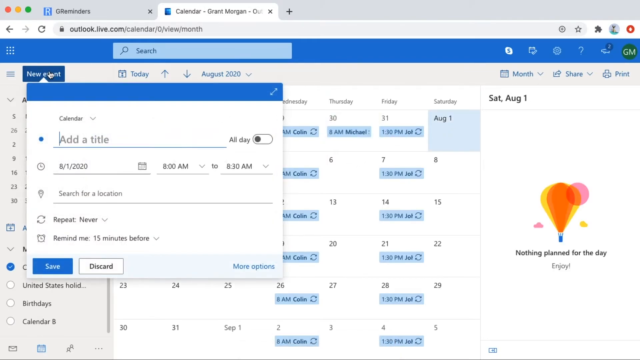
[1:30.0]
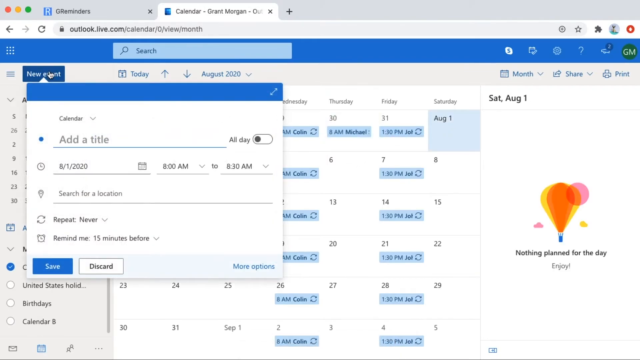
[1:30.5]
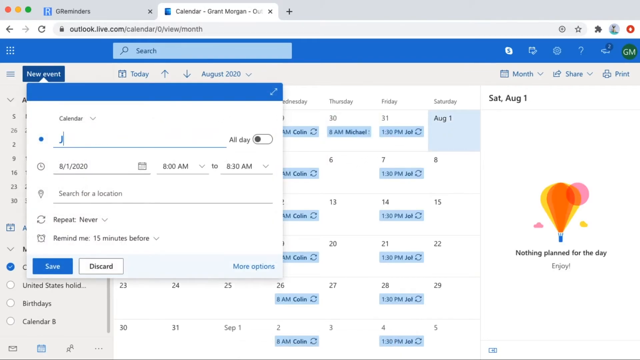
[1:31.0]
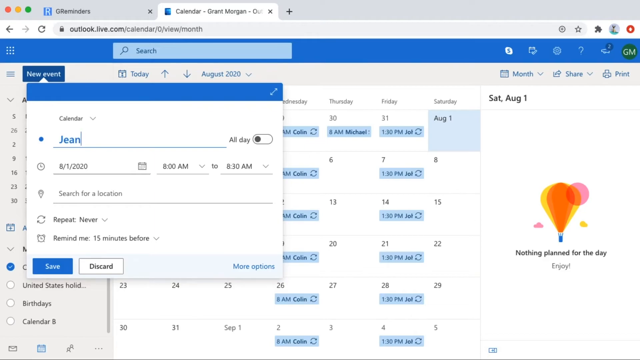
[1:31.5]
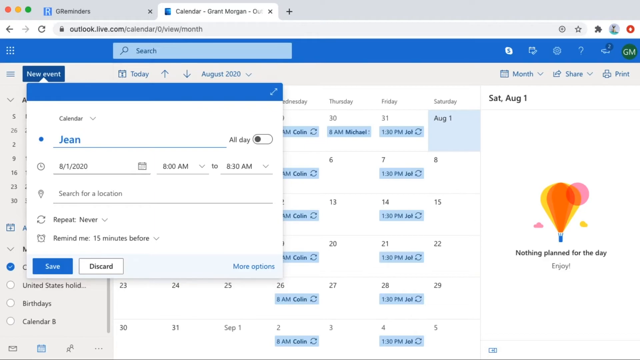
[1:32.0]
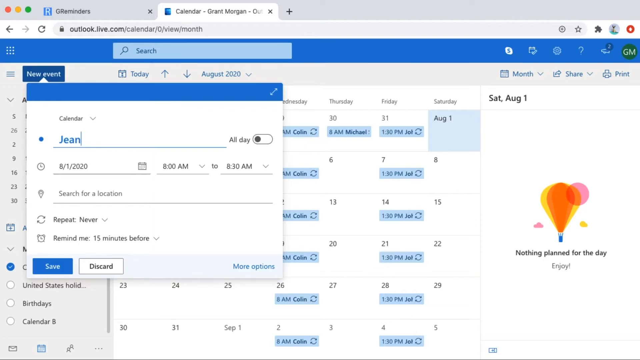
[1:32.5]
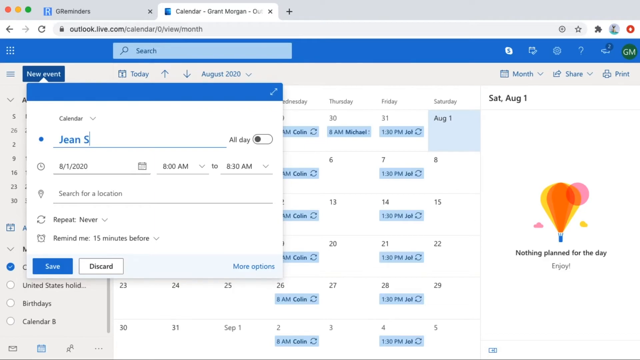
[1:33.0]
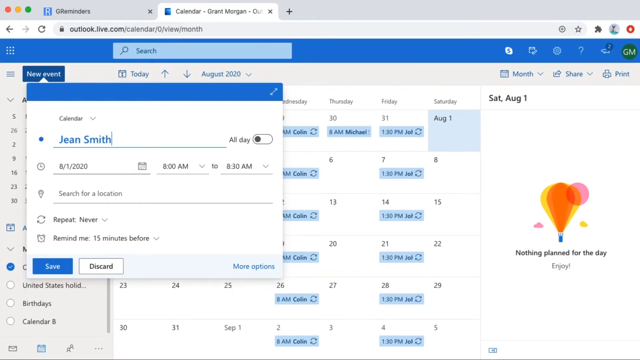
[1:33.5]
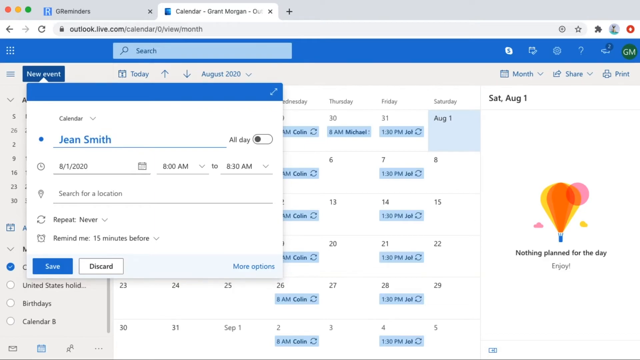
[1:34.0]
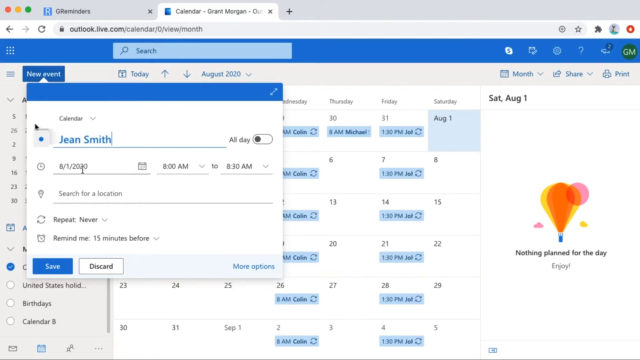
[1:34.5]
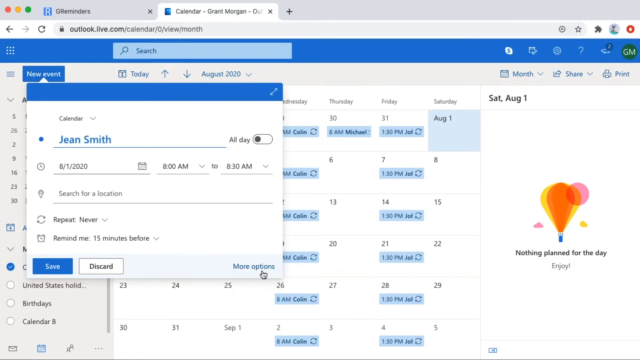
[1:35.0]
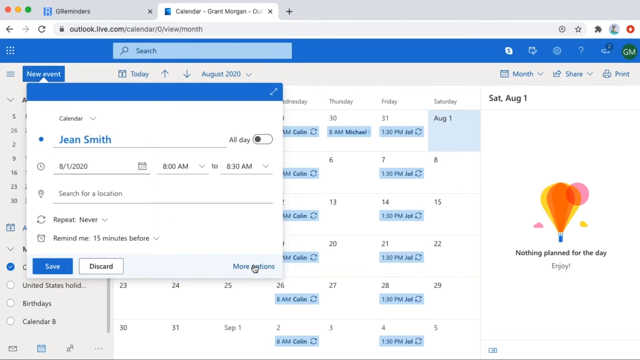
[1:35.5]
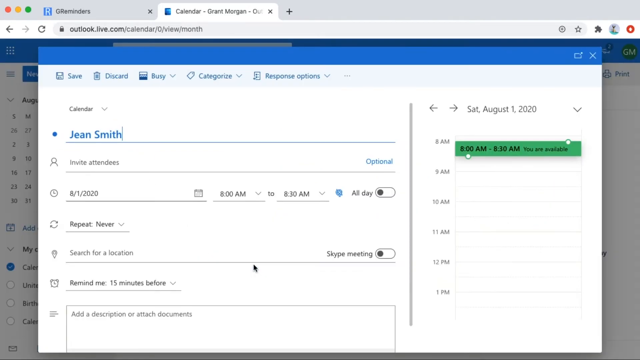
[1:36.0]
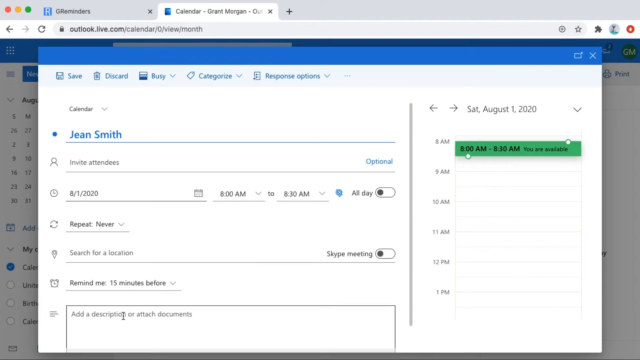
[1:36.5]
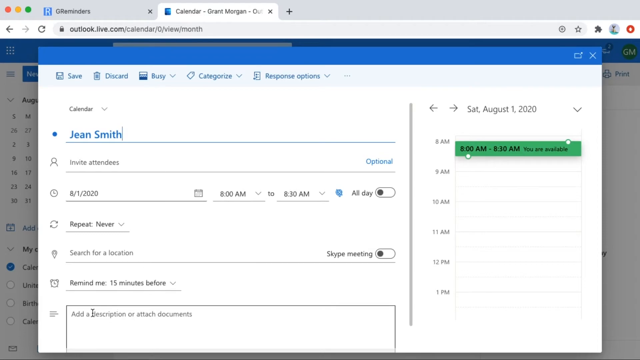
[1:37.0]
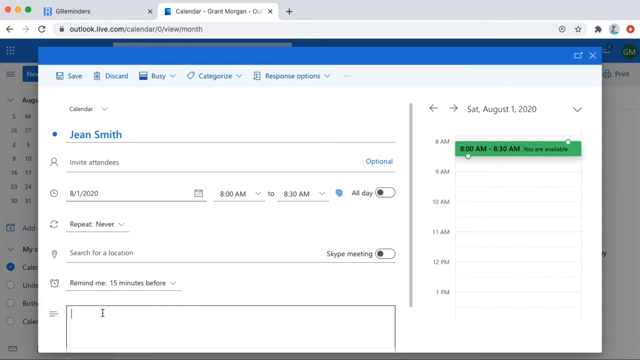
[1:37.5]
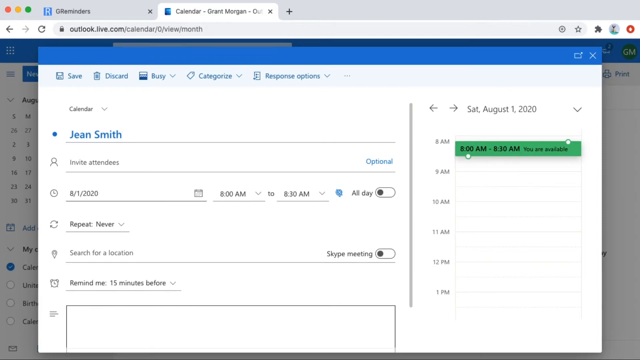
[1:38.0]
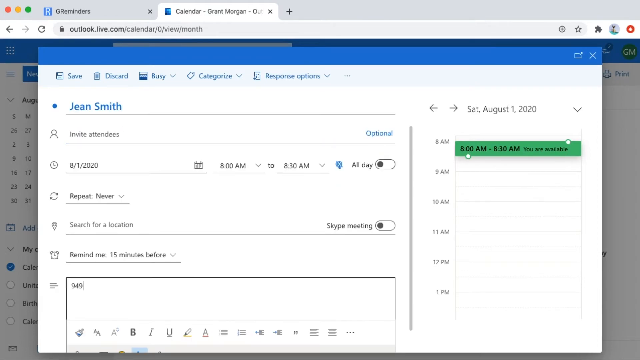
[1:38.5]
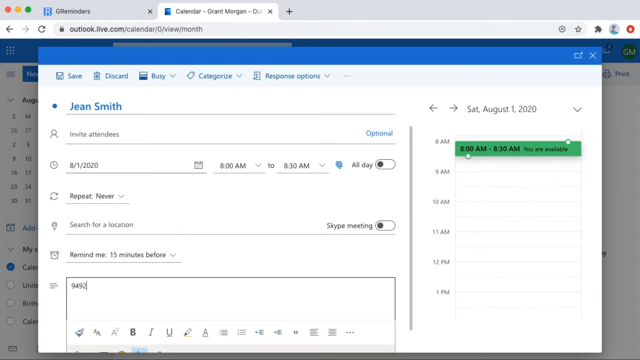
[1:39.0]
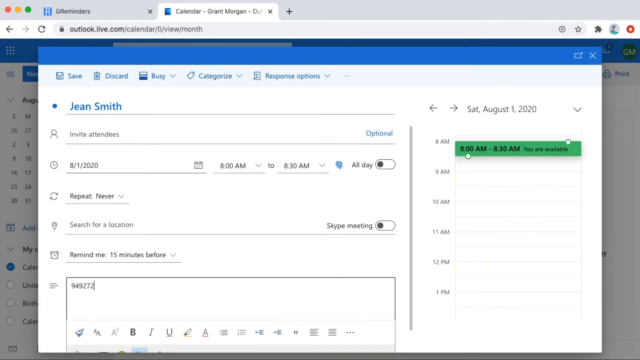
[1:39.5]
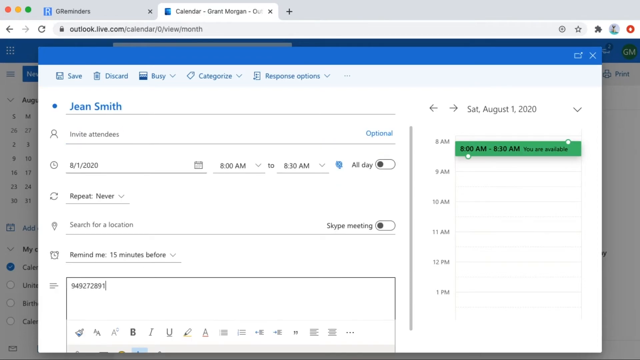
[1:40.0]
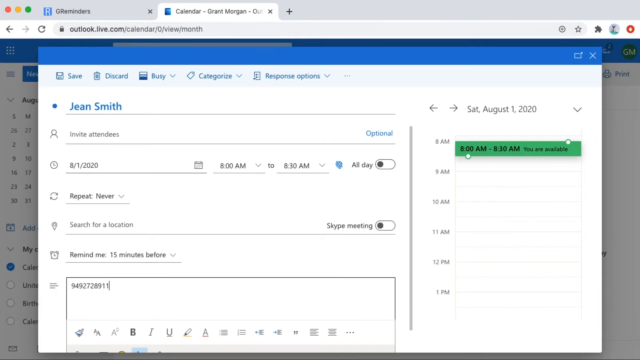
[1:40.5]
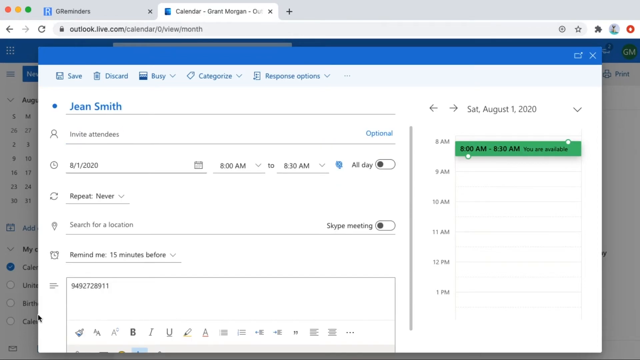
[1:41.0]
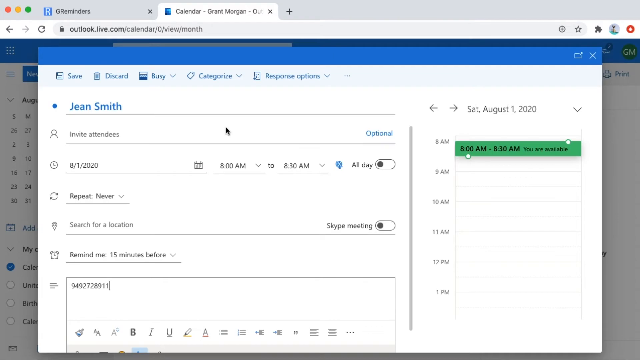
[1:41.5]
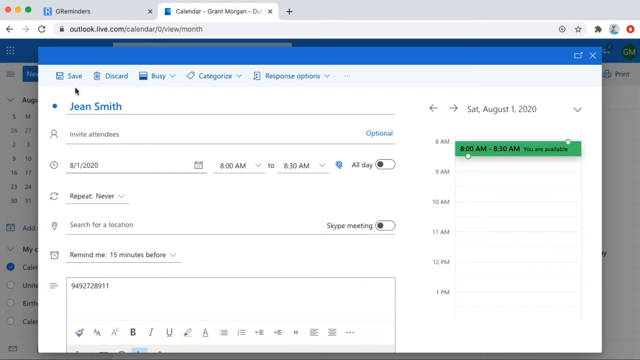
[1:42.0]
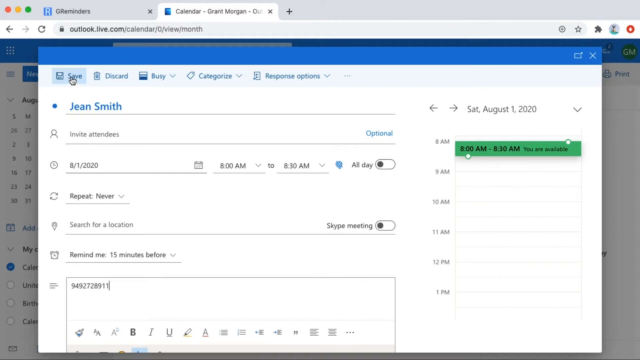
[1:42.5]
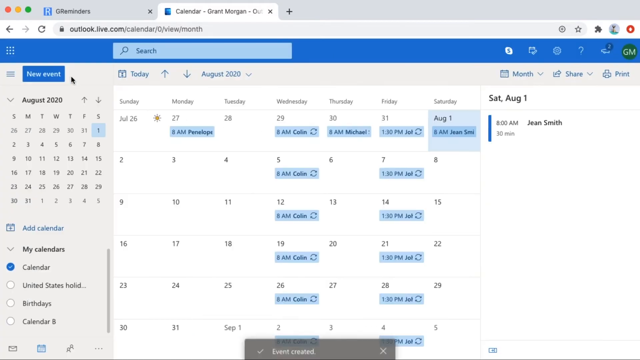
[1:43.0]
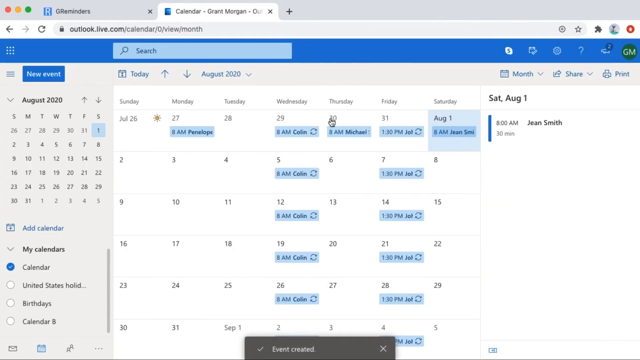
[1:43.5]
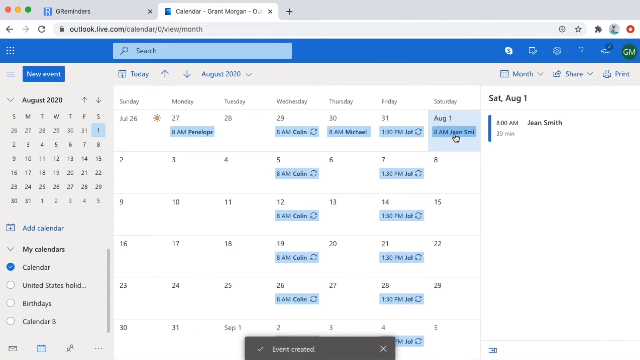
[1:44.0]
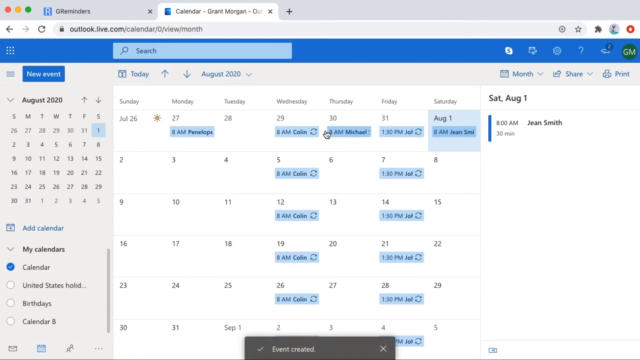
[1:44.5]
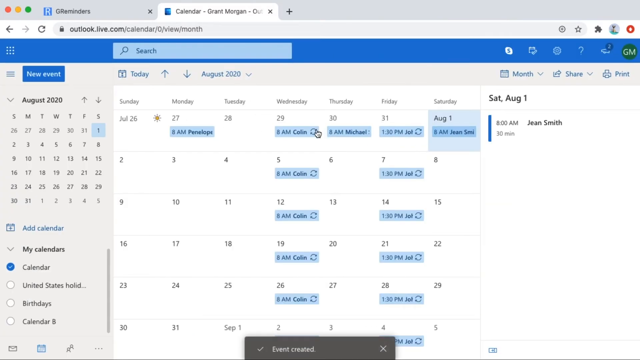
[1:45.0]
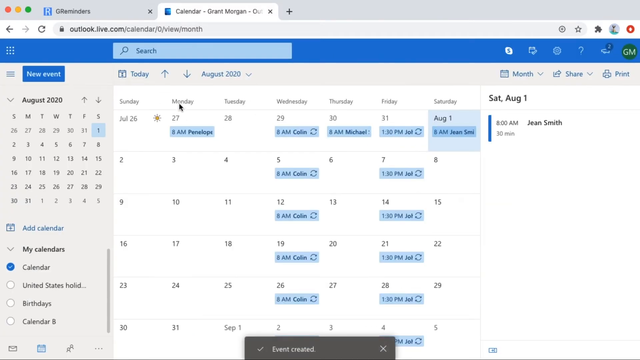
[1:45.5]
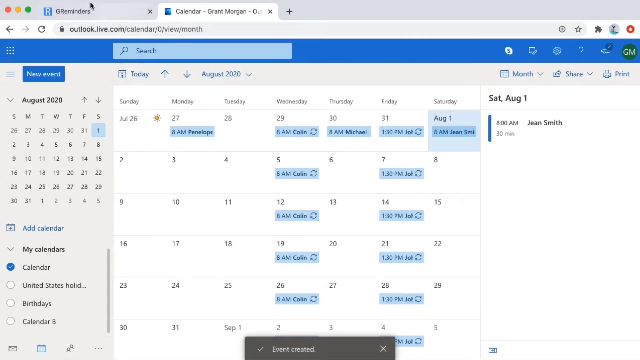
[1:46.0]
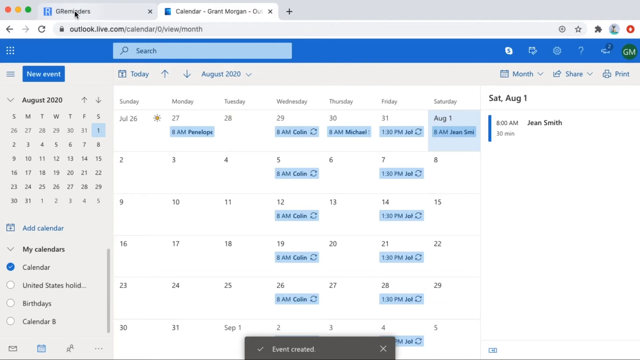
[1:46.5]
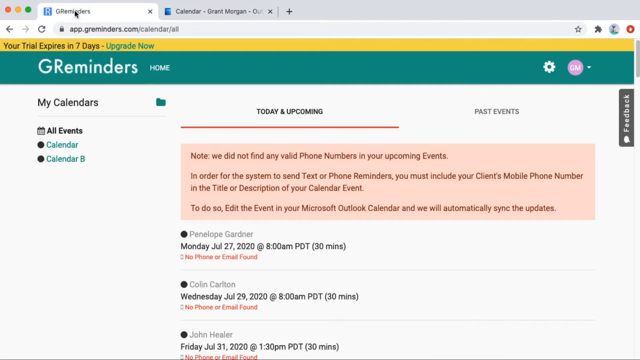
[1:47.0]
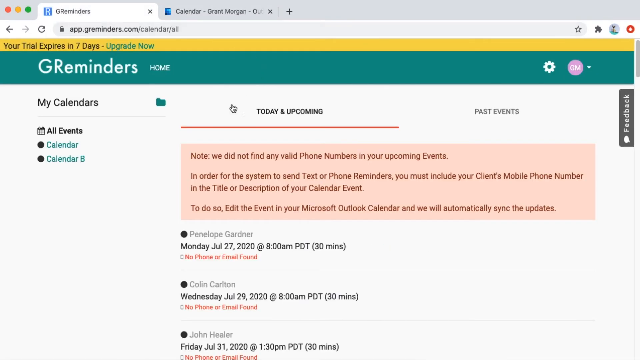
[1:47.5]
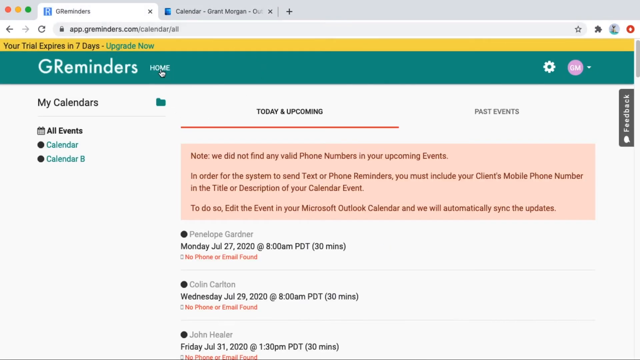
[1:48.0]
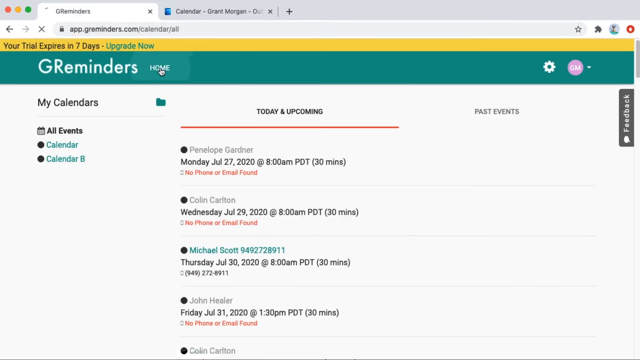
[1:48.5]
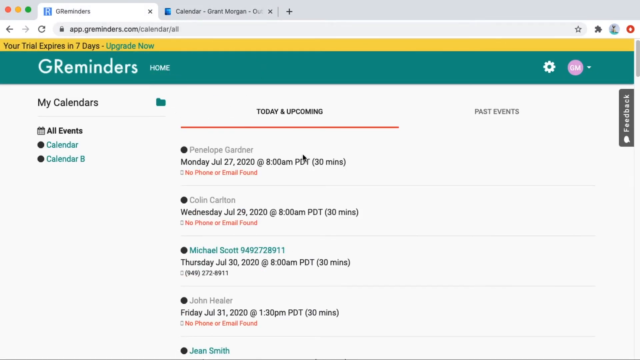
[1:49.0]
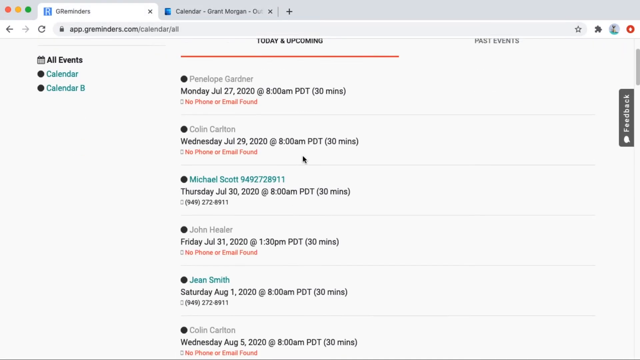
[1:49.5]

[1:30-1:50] The man creates another meeting, this time with Jen Smith. He clicks more options and writes a phone number in the description. On the G reminder website, a note reads "we did not find any valid phone numbers in your upcoming events. In order for the system to send text or phone reminders, you must include your client's mobile number in the title or description of your event calendar." After the man includes the client's phone number, new upcoming meetings with this number appear on G reminders.